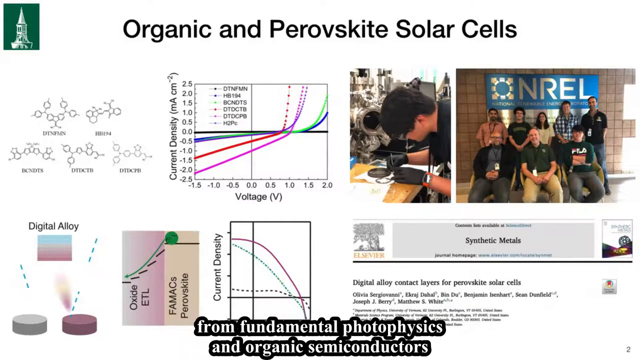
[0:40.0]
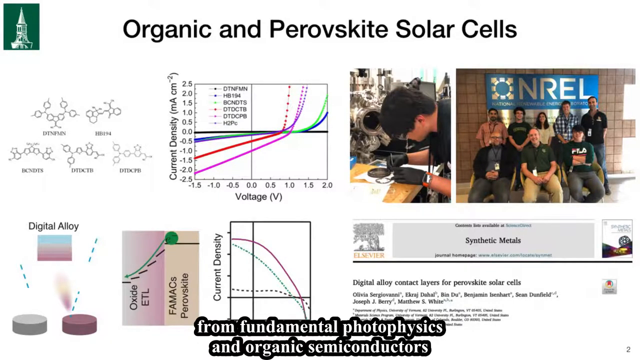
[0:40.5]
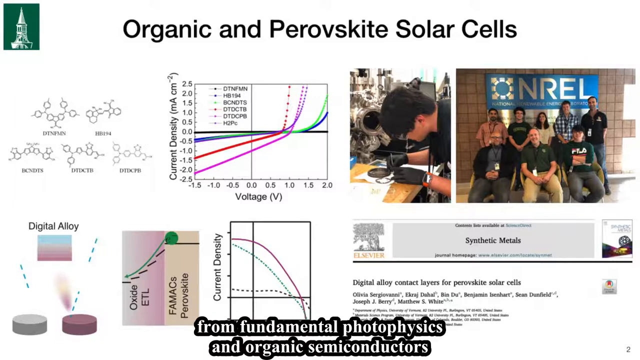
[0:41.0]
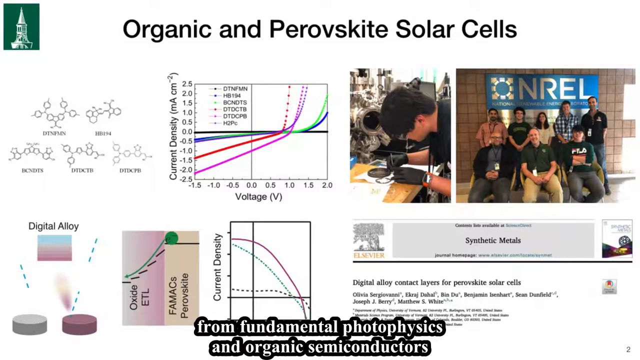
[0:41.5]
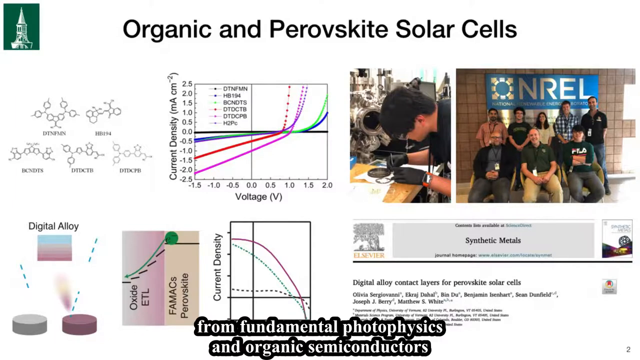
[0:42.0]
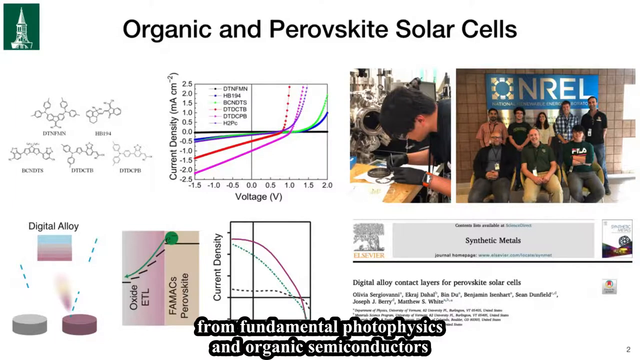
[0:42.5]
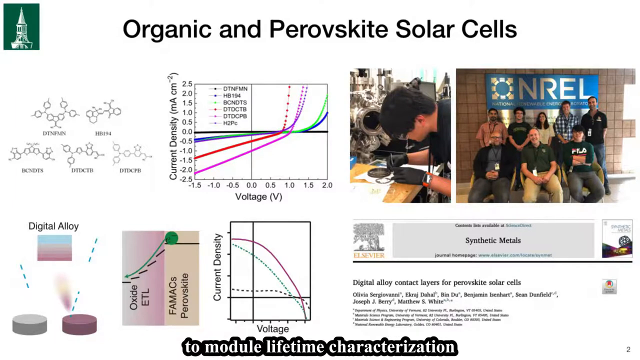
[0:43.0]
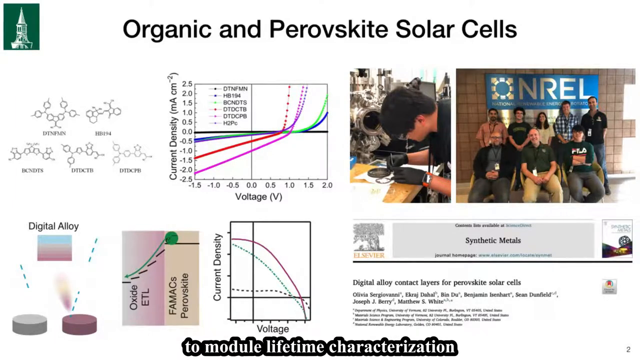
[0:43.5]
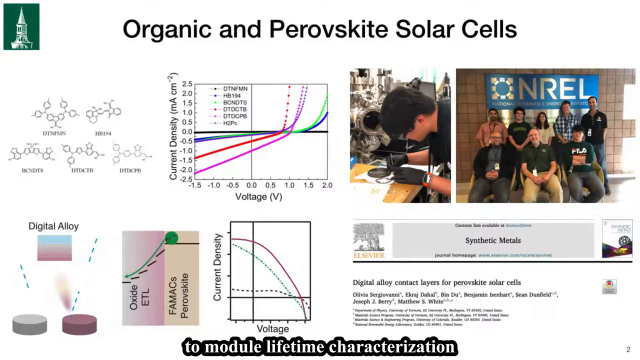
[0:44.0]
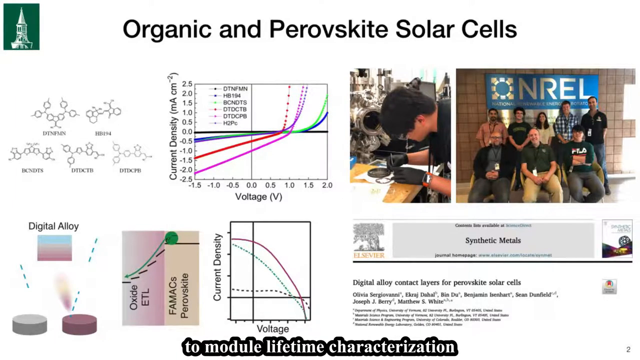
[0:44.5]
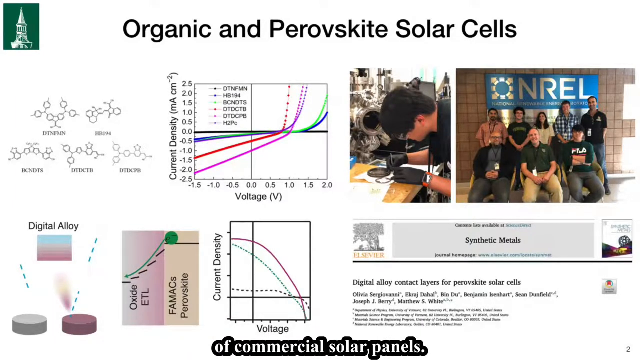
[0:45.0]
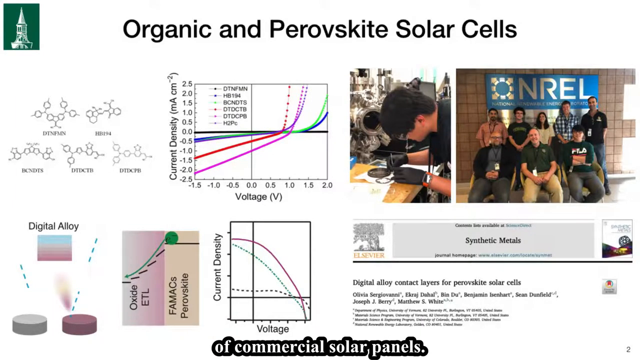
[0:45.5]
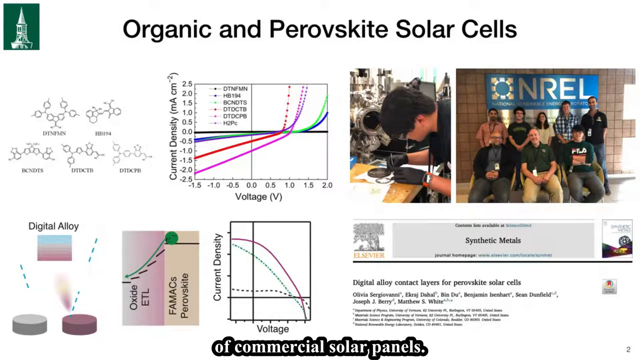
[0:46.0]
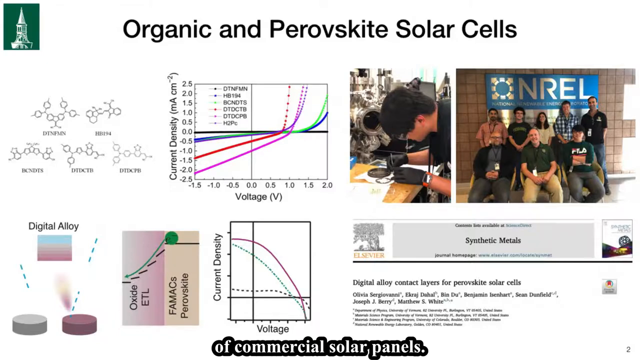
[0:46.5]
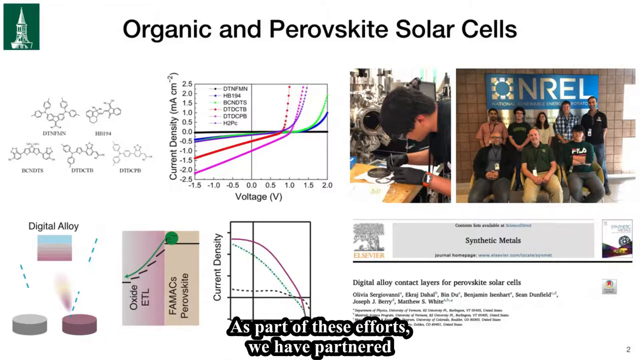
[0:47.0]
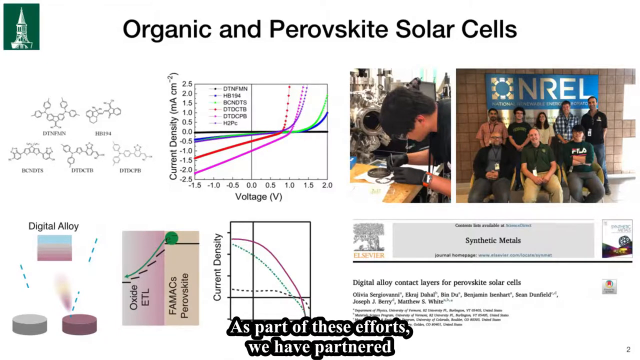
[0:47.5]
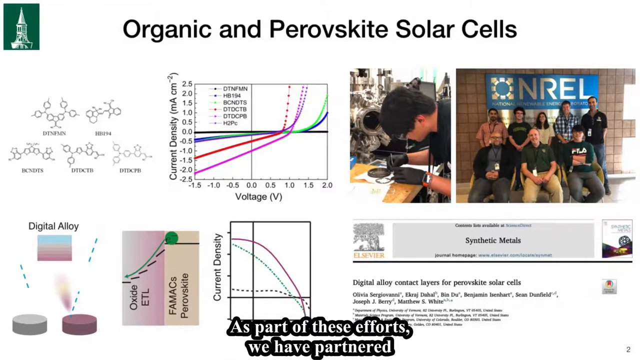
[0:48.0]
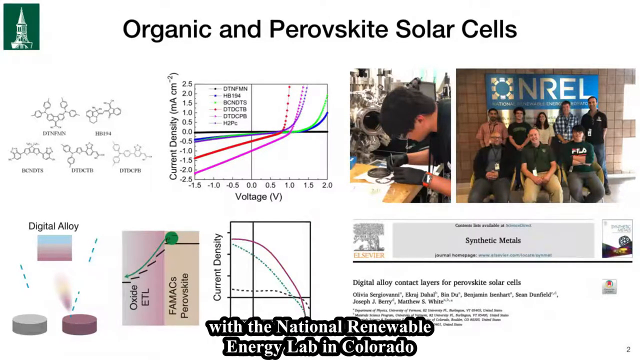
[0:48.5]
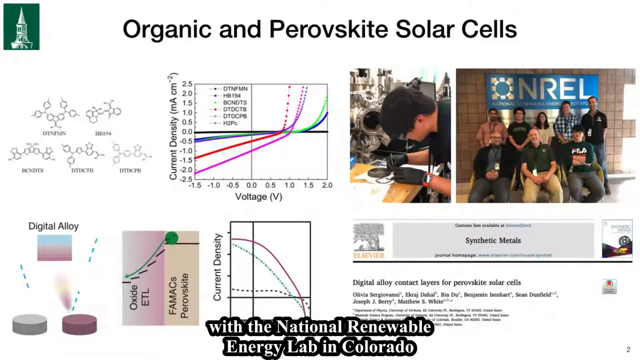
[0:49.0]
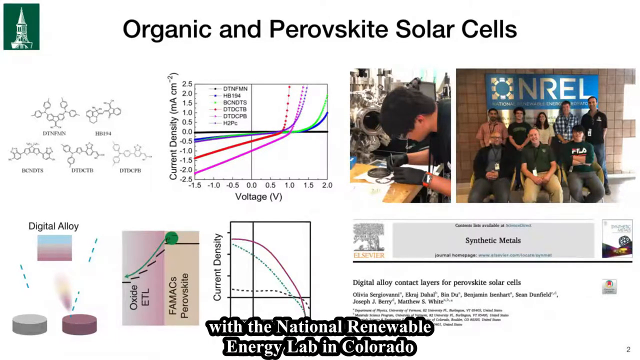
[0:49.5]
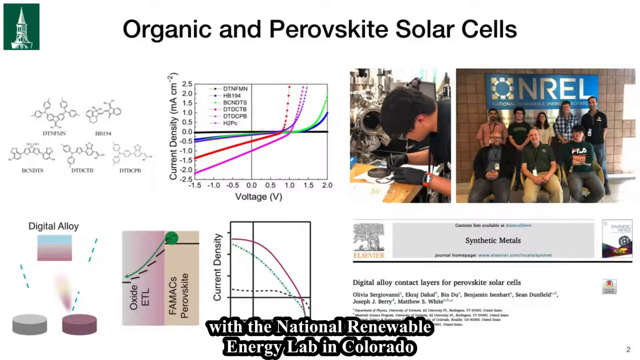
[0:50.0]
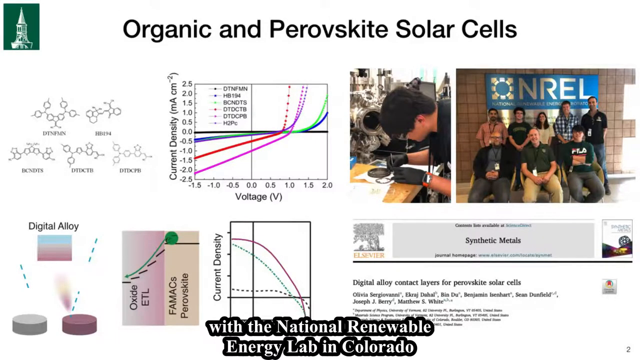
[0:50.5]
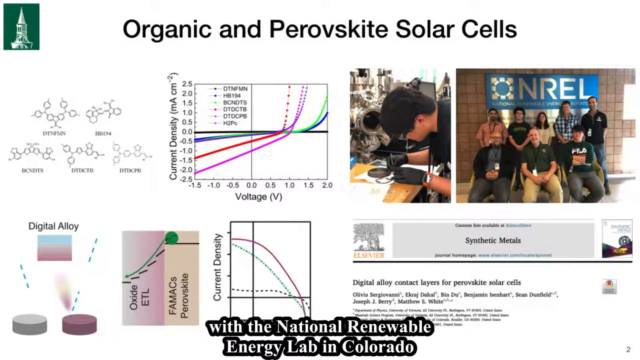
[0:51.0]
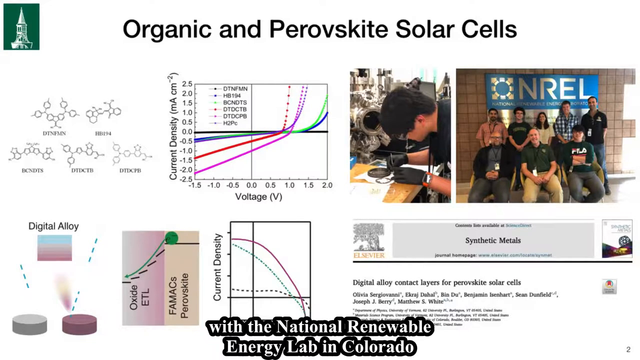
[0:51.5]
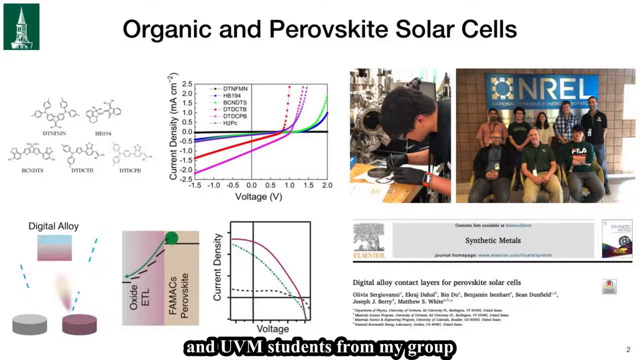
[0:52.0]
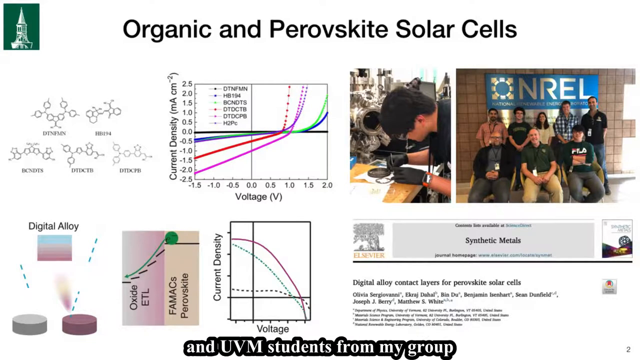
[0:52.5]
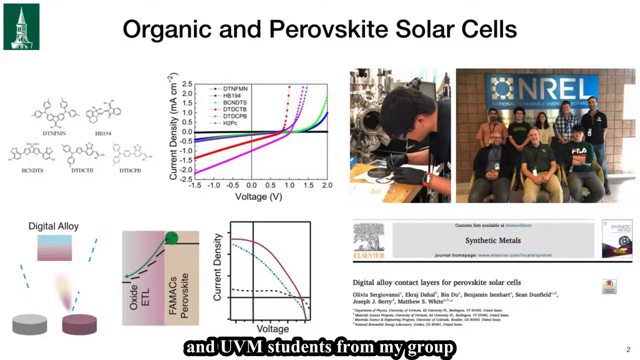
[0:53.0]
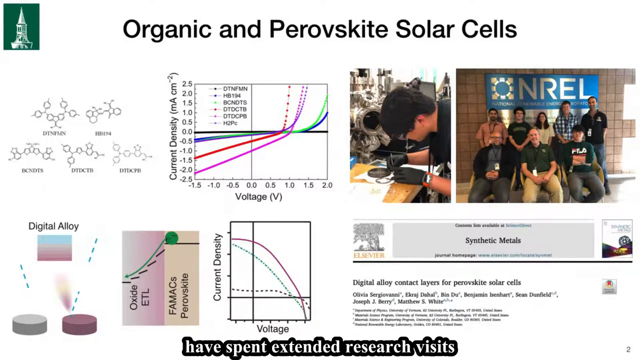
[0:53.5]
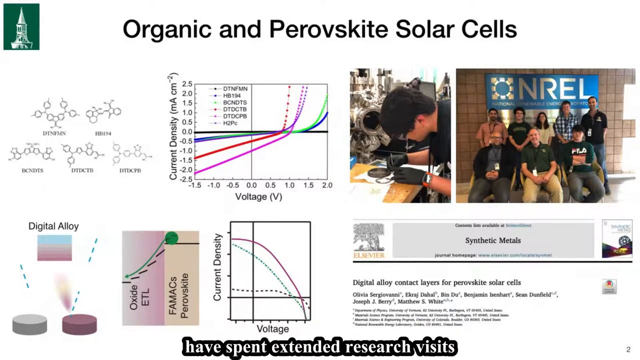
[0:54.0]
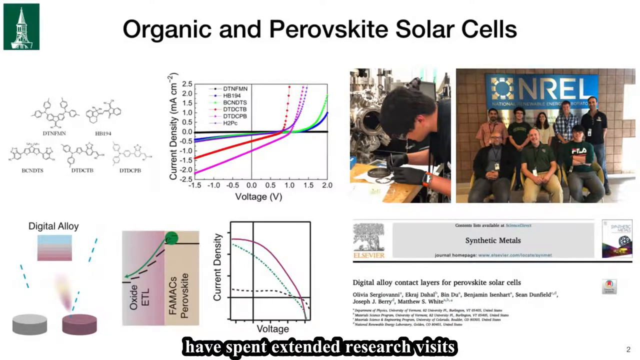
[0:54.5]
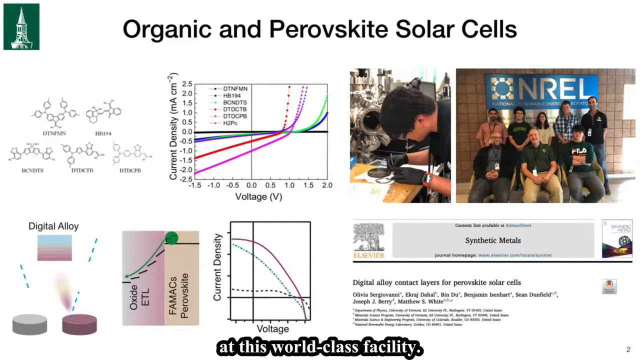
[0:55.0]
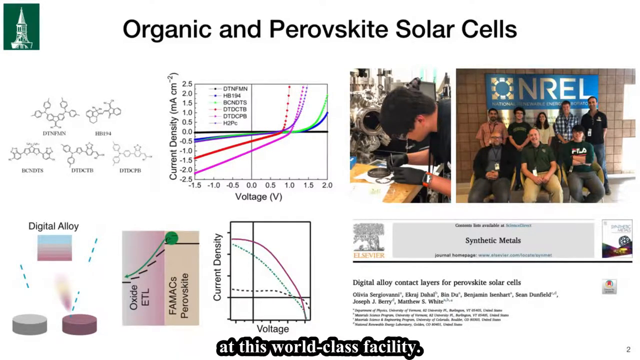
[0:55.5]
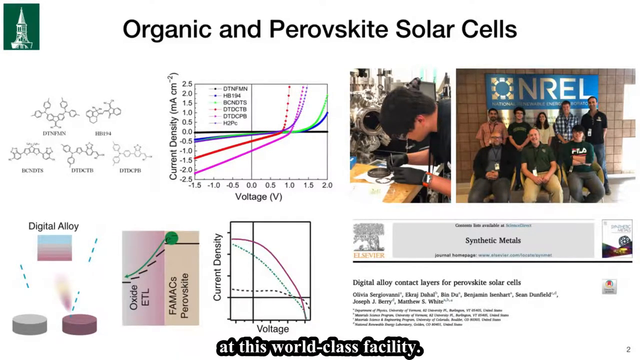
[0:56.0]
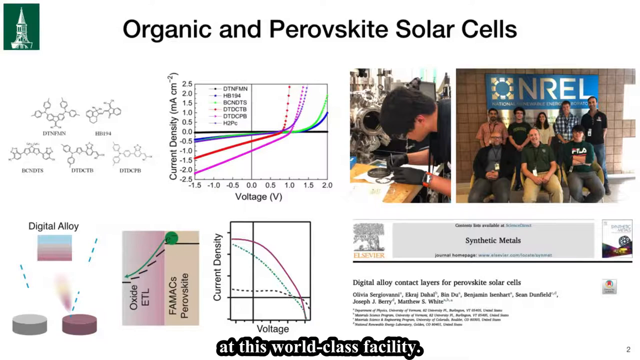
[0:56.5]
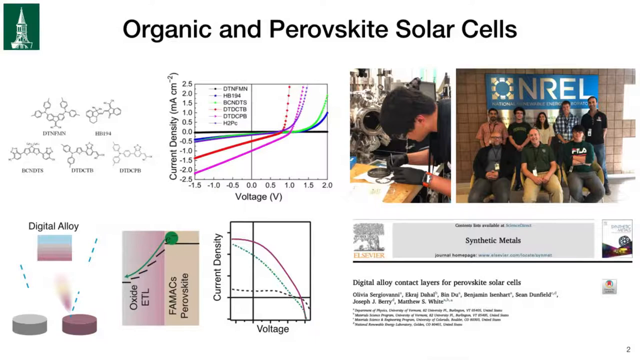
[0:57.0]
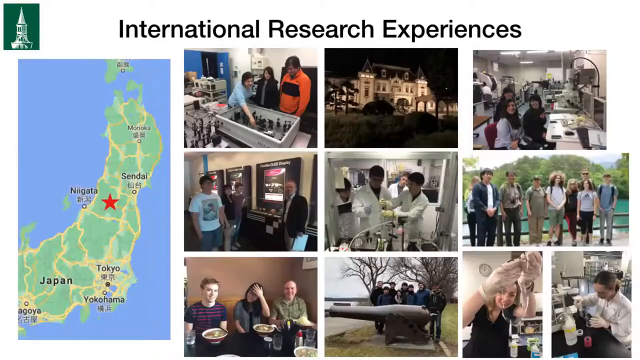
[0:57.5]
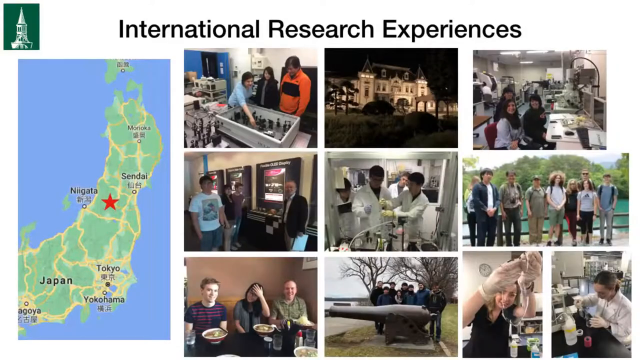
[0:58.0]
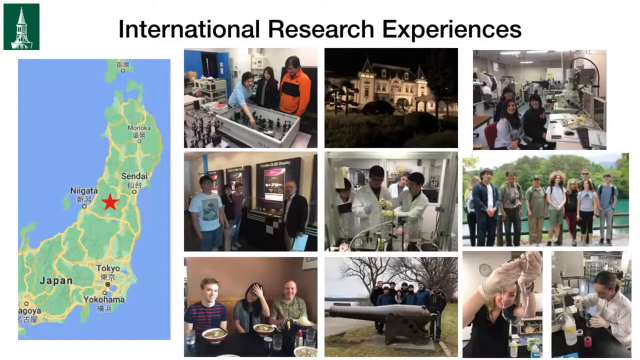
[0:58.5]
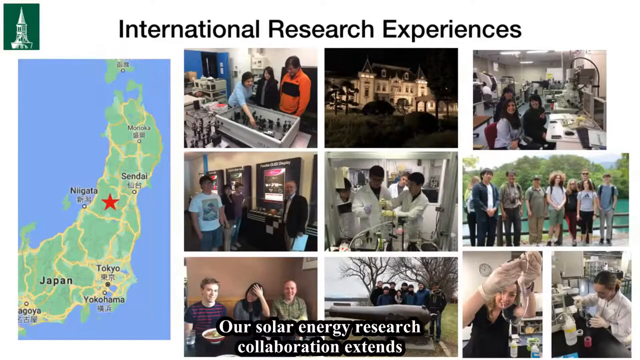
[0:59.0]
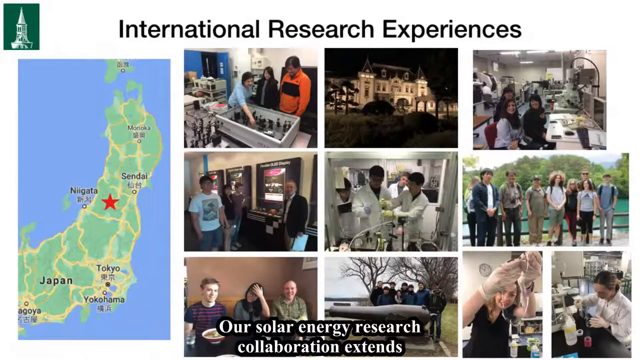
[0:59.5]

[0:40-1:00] Assistant Professor Matthew White continues his presentation, talking about organic and perovskite solar cells. A slide shows a picture of a group of individuals sitting behind a blue sign that says "NREL." Other images include someone who looks like they are working on something in a lab, a graph showing voltage and current density, a graphic showing digital alloy, and a slide on synthetic metals. He talks about his lab group working at a world-class facility. Another slide shows Japan and Tokyo, with several images: a house, several people working in a lab, and a group of individuals standing outside behind a body of water. Several of the pictures show Asian individuals. He talks about international research experiences, and it looks like the group may have traveled to Japan.